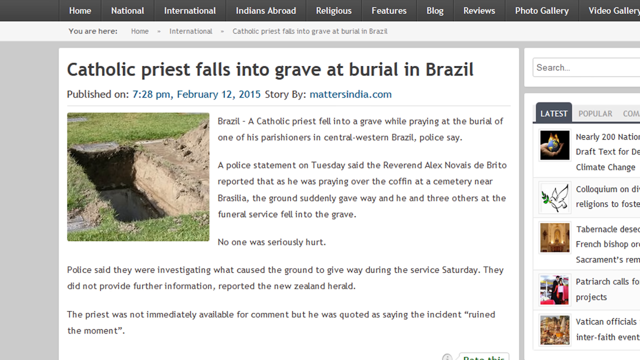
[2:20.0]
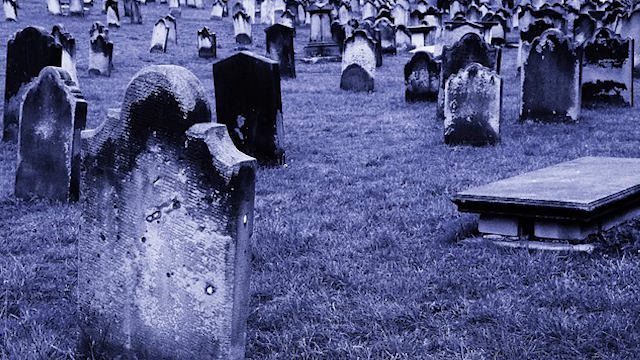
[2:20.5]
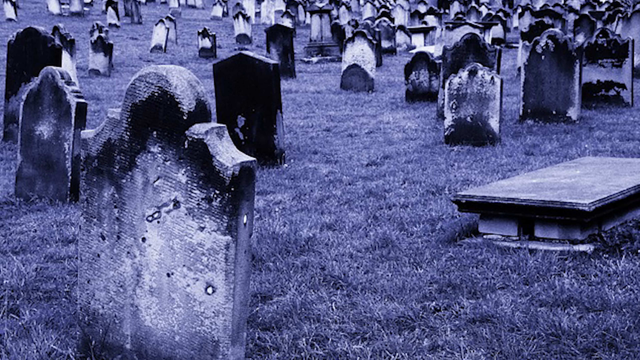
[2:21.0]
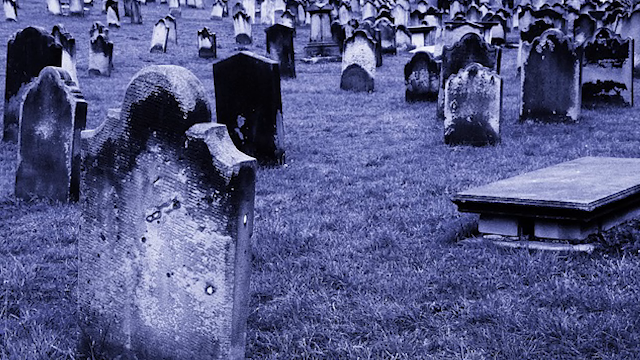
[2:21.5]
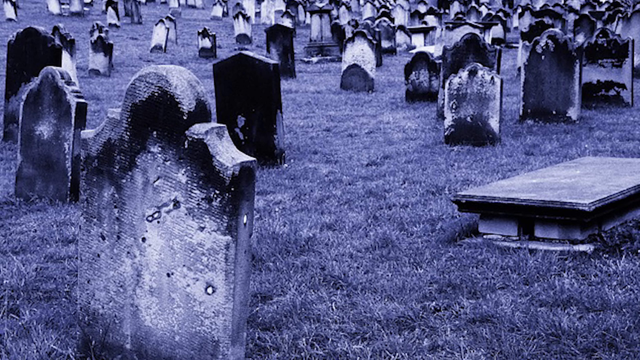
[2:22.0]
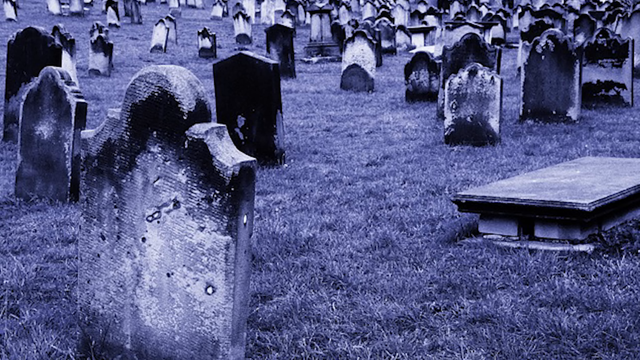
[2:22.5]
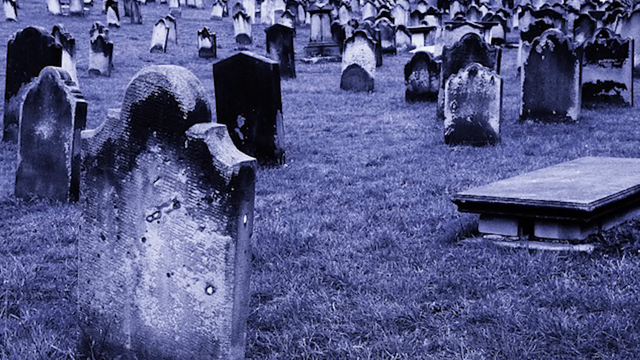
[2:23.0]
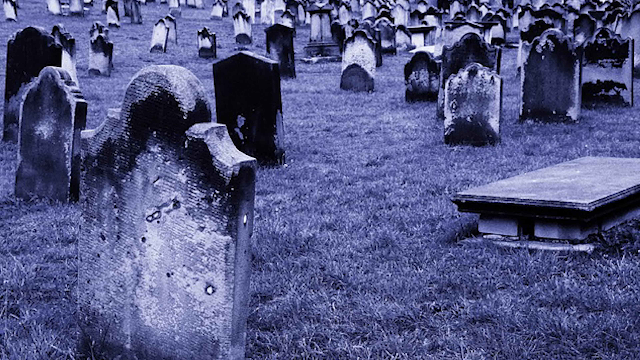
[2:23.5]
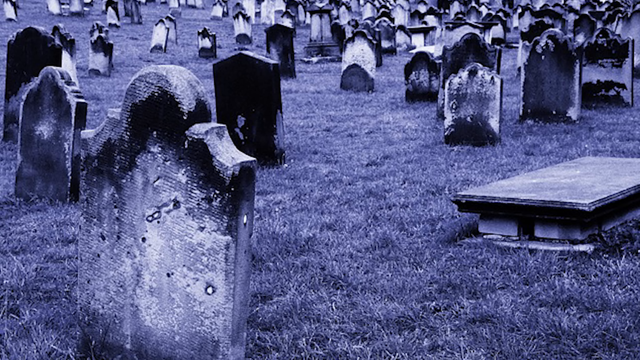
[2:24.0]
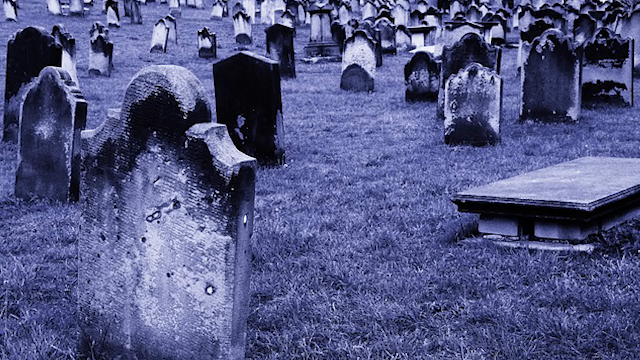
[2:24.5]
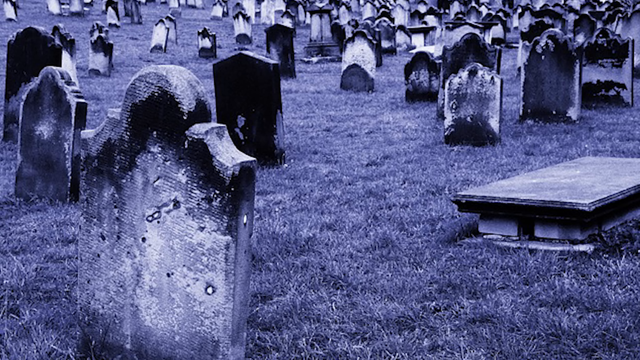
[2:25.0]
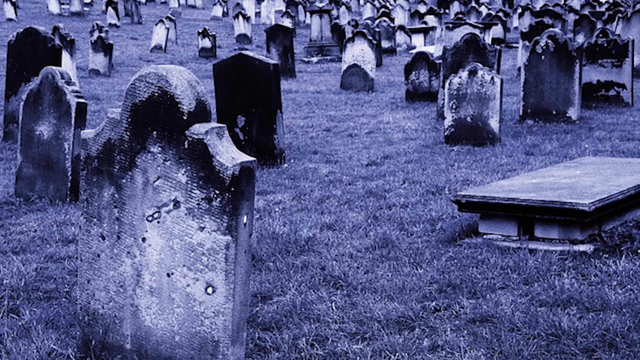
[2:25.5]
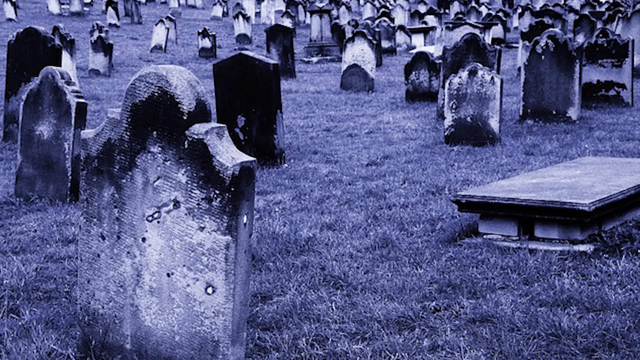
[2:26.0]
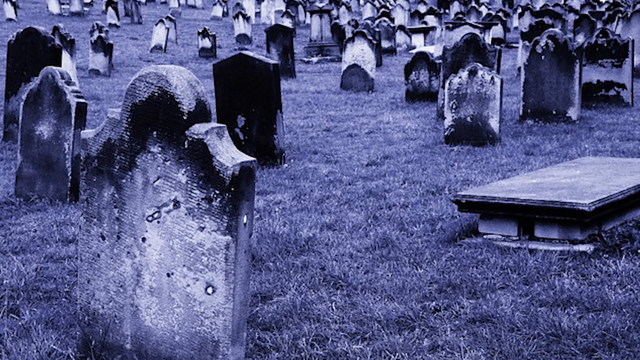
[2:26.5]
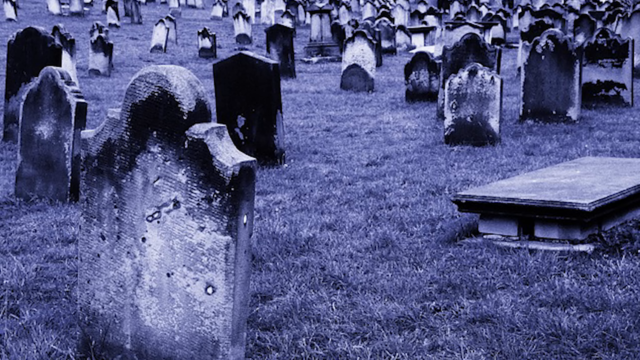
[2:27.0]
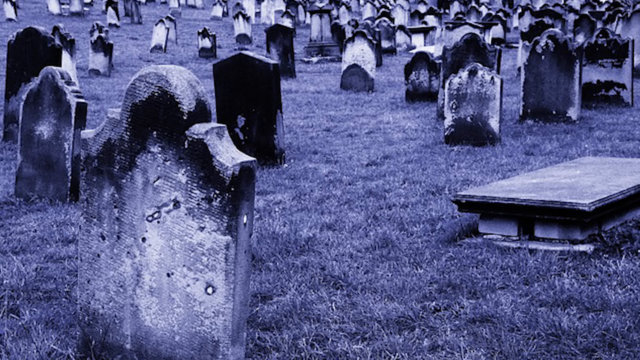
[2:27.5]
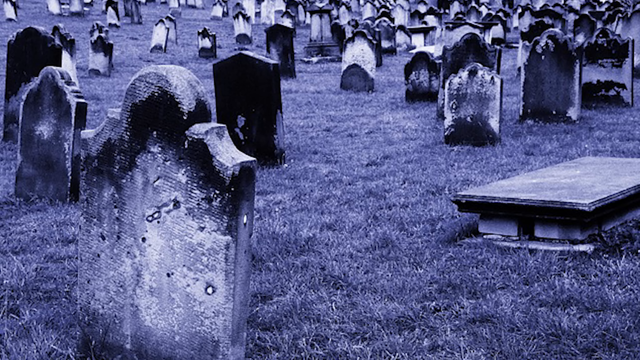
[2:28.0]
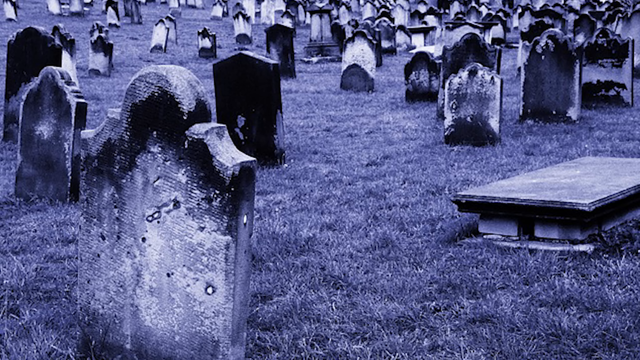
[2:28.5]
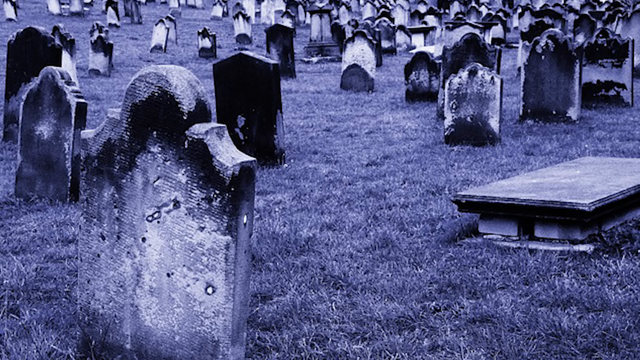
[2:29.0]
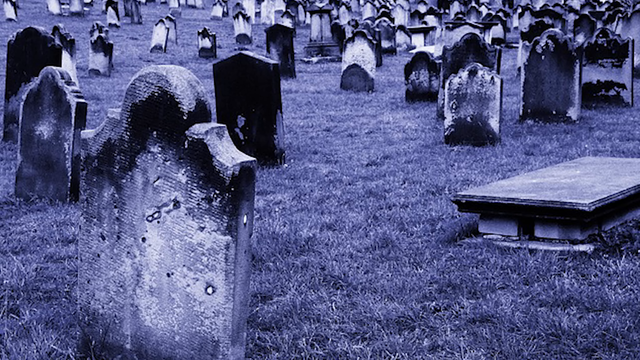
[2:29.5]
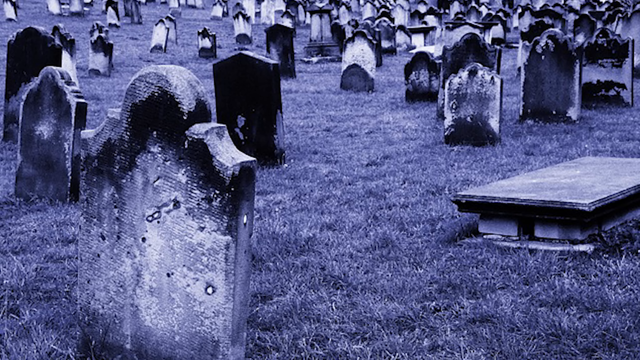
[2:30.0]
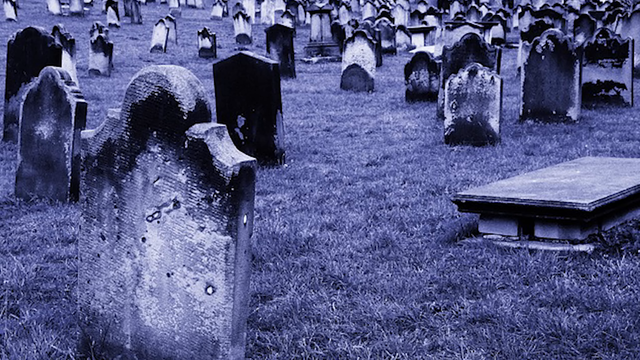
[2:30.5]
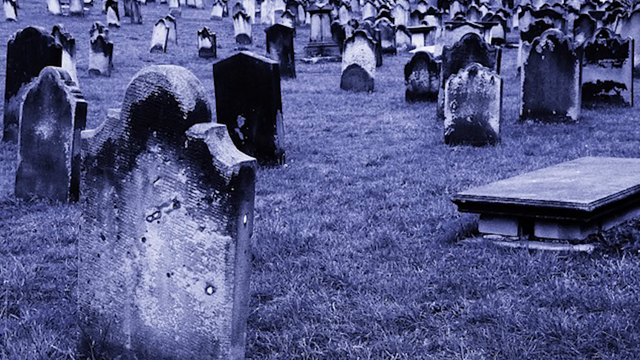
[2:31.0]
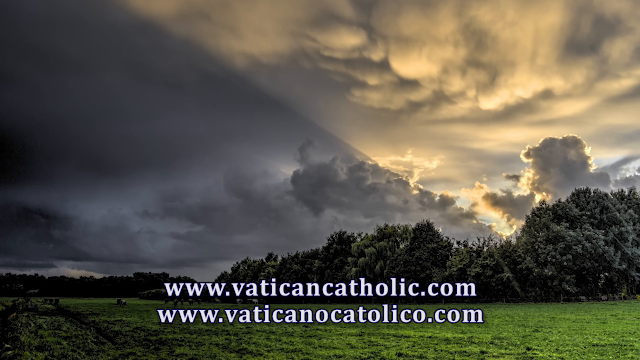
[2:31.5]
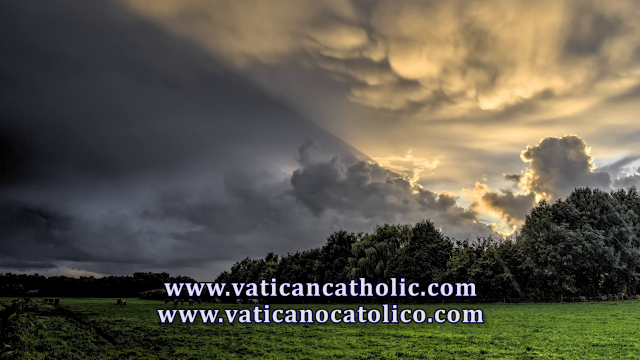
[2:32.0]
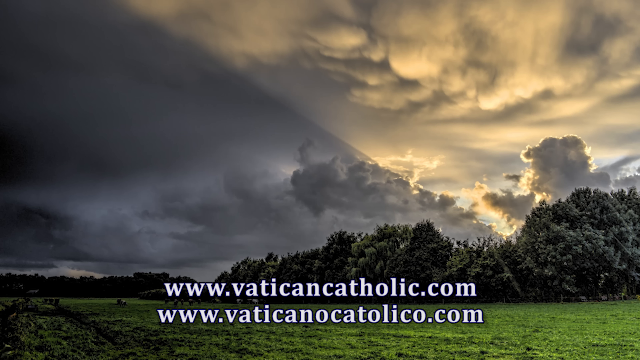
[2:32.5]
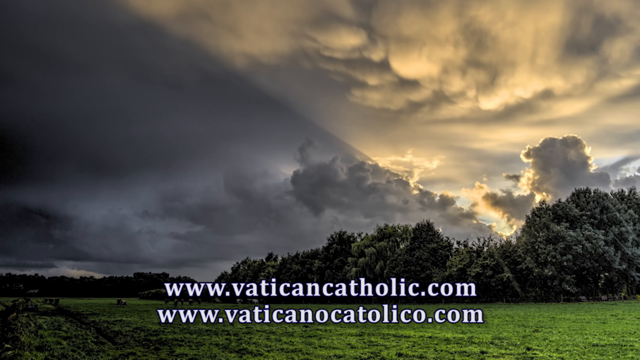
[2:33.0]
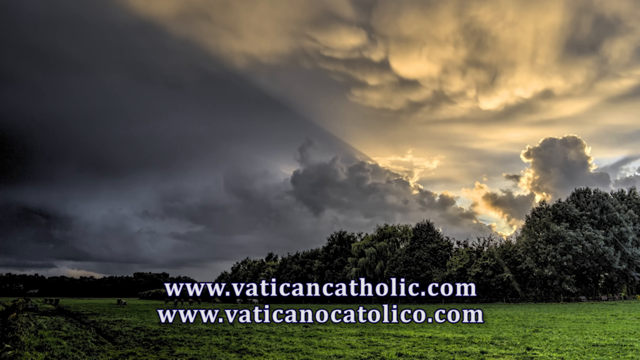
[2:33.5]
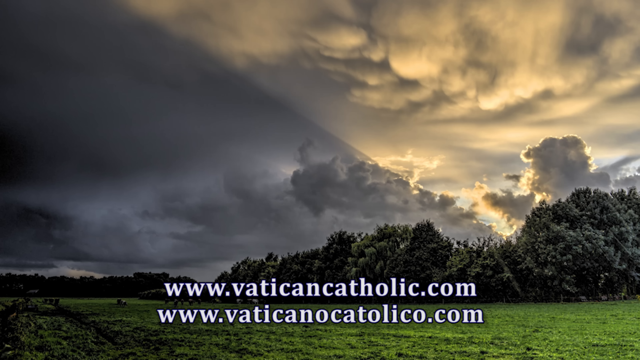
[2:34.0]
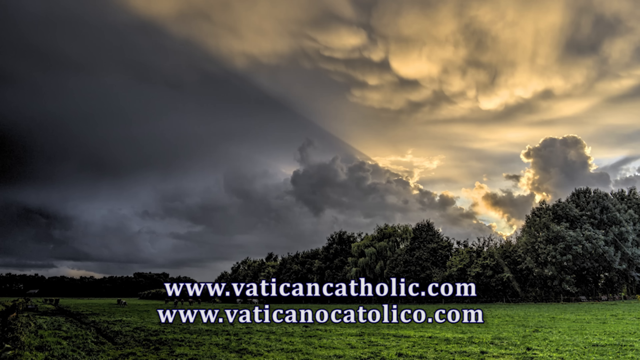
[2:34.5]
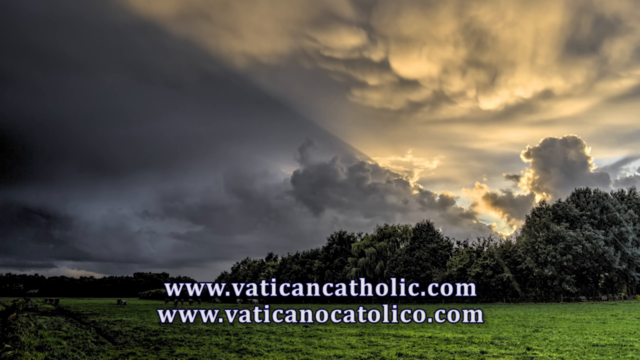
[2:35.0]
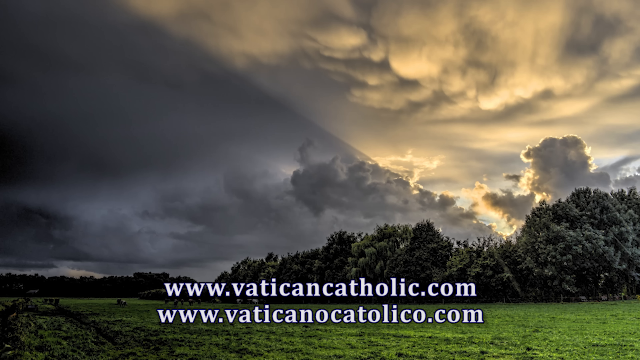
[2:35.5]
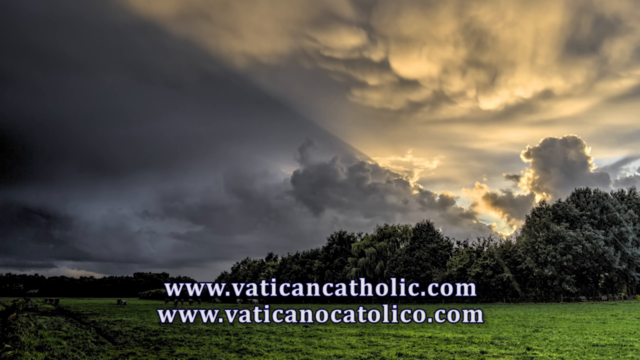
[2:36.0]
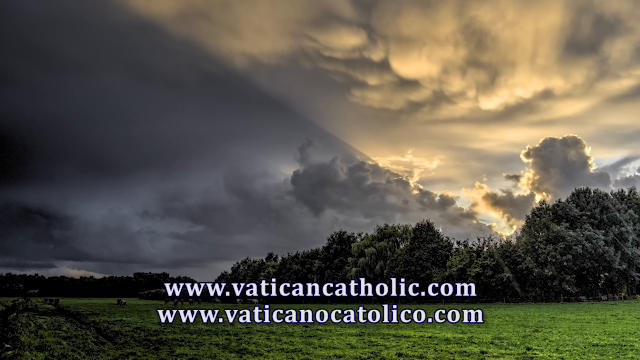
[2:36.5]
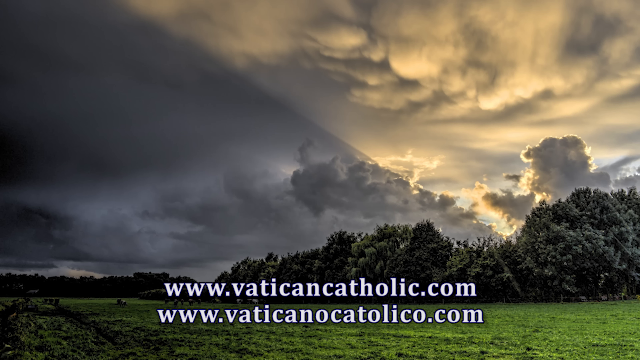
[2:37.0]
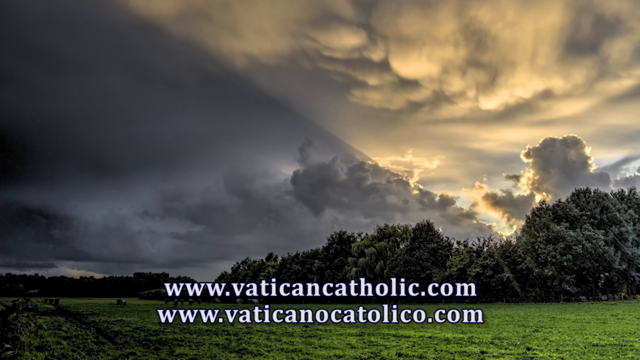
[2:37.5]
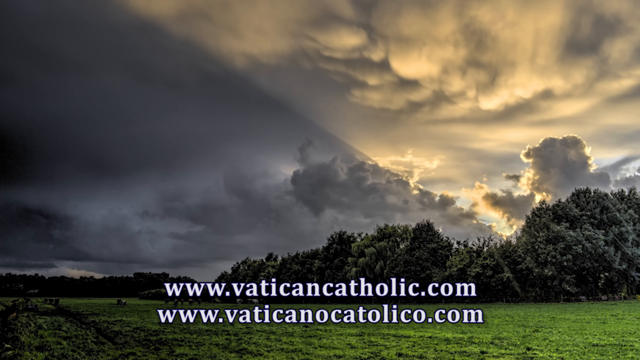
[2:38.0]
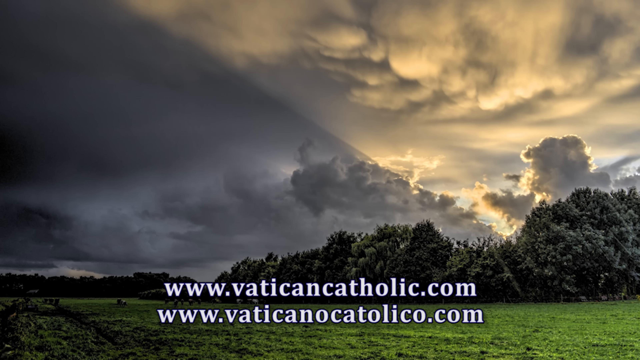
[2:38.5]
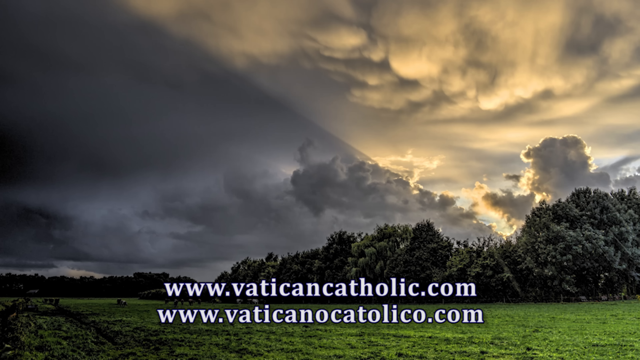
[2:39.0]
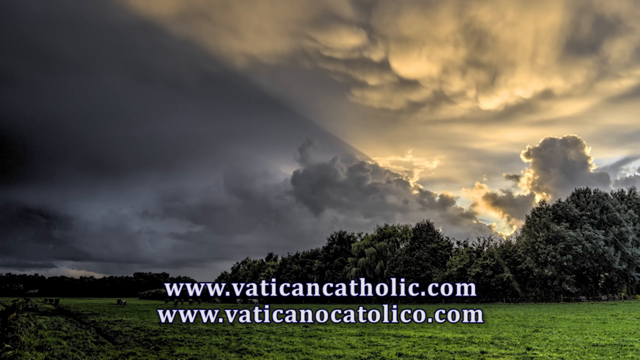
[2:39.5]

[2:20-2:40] A web page shows, at the very top in black, "Catholic priest falls into grave at burial in Brazil". Underneath is a publication line reading "7-28 PM, February 12, 2015". Below that is a square picture of an empty grave hole with green grass around it and a pile of dirt. To the right of the picture is the text "Brazil. A Catholic priest fell into a grave while praying at the burial of one of his parishioners in central western Brazil, police say." It cuts to a black and white picture of an old graveyard that also contains a blue tent. It shows hundreds of unkept headstones; some are black, some black and gray with a little white, all chipped, and the grass around them is very dark. The picture looks eerie. It then cuts to a picture of trees with green grass around them; the sun is behind the trees but not visible, and a single beam of light shoots up over the tops of the trees through gray clouds. Along the bottom of the screen is the text "www.vaticancatholic.com".